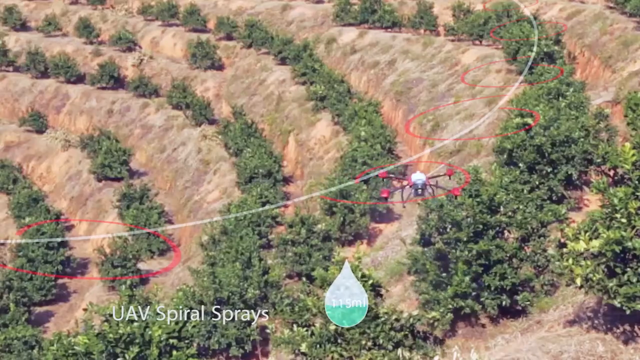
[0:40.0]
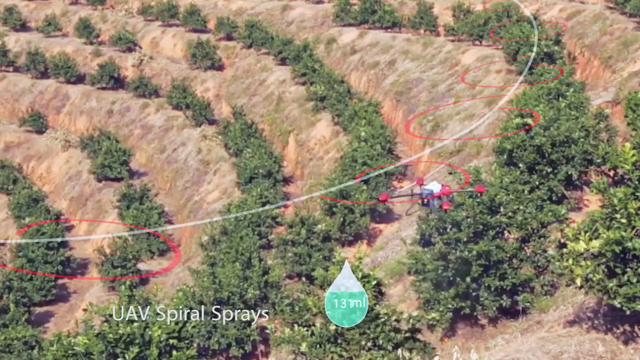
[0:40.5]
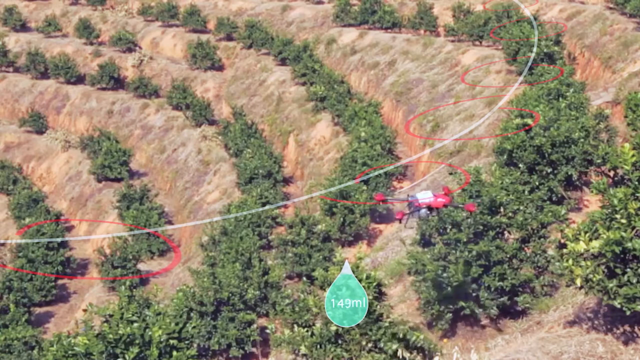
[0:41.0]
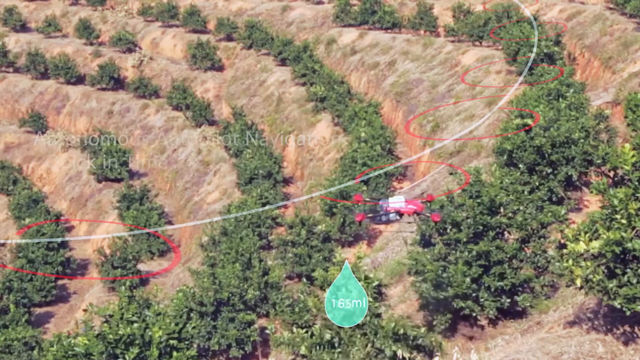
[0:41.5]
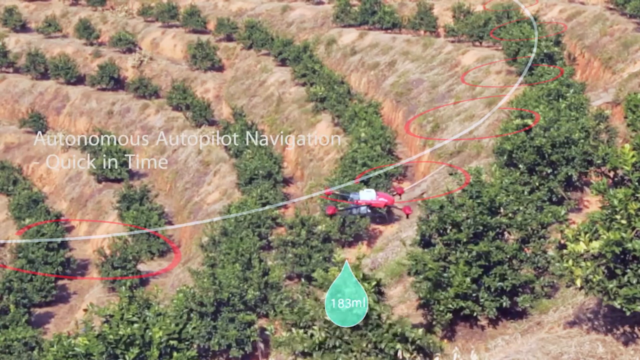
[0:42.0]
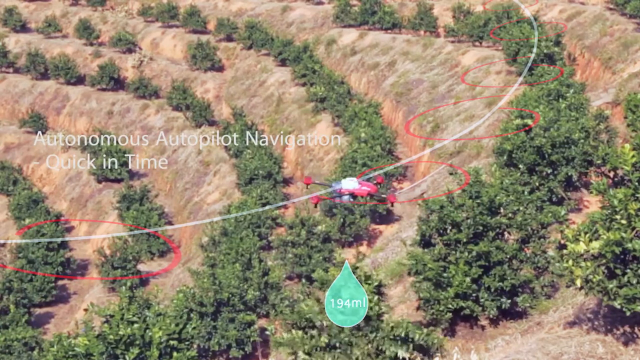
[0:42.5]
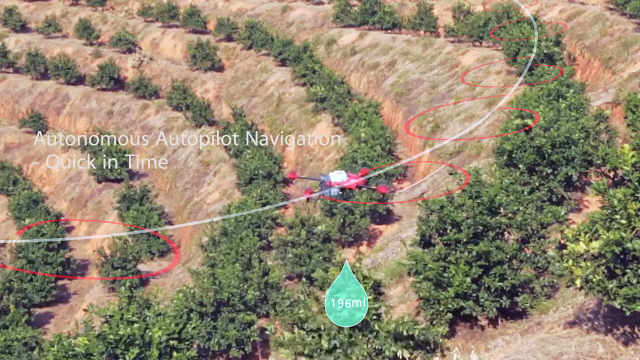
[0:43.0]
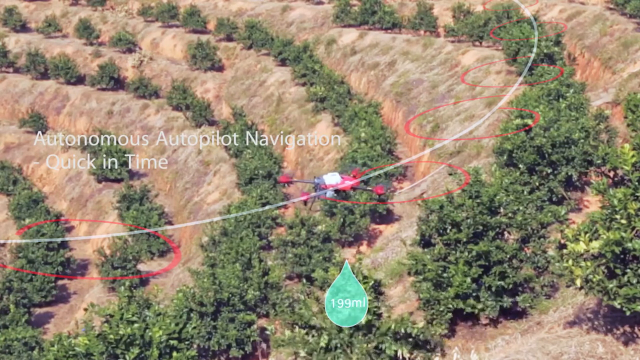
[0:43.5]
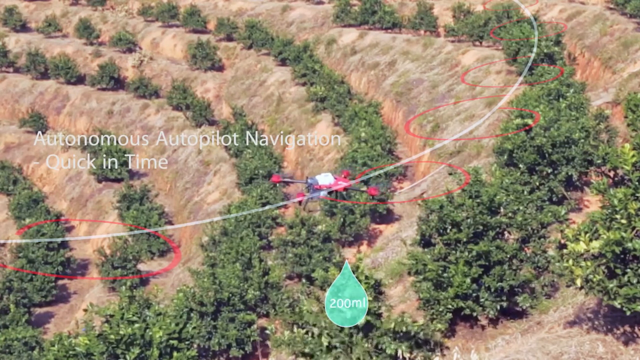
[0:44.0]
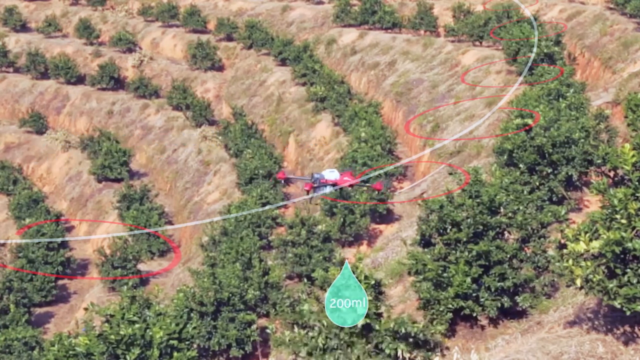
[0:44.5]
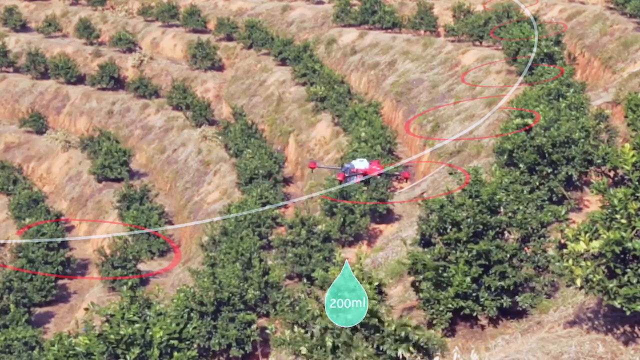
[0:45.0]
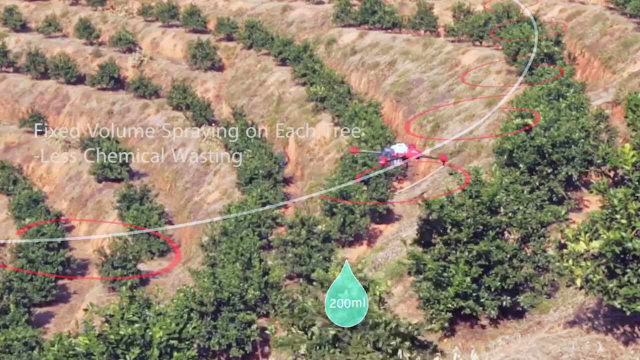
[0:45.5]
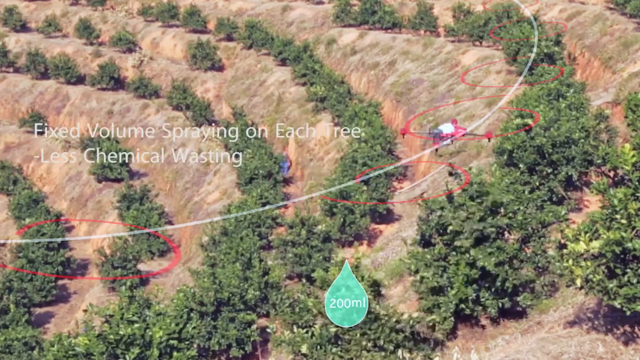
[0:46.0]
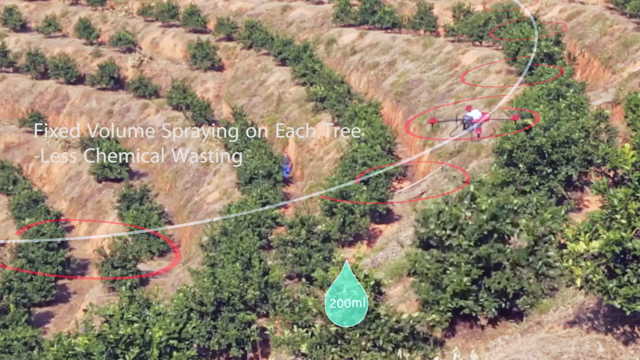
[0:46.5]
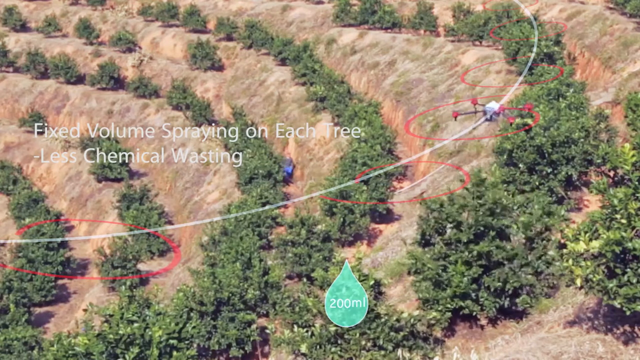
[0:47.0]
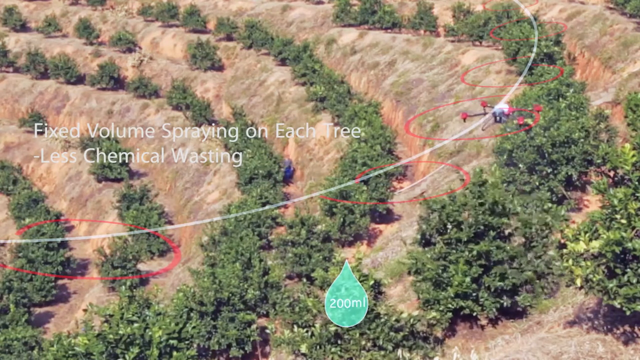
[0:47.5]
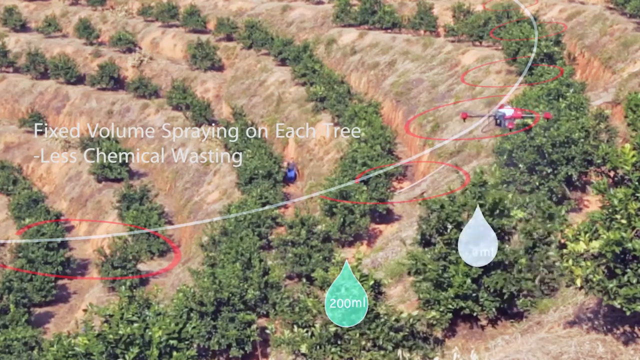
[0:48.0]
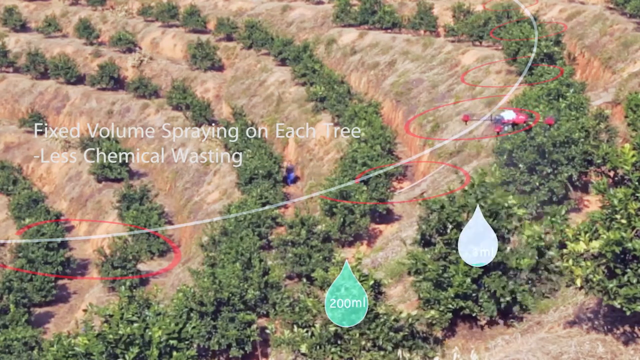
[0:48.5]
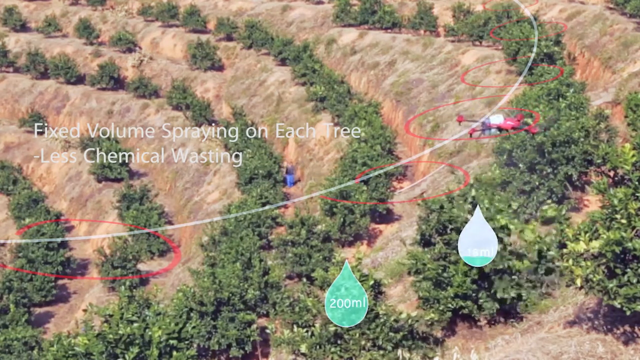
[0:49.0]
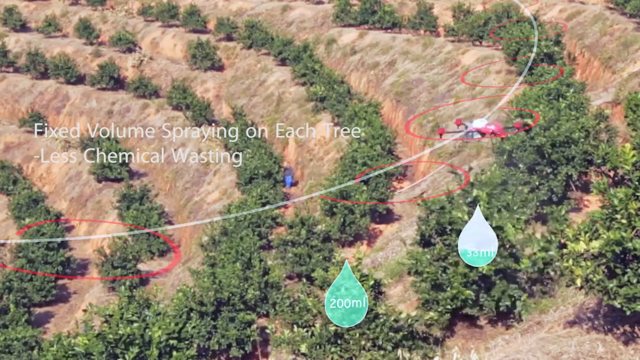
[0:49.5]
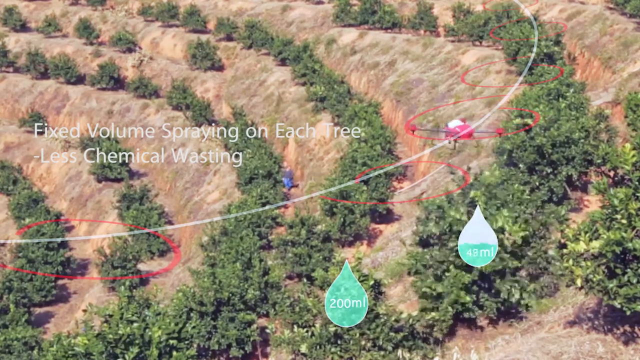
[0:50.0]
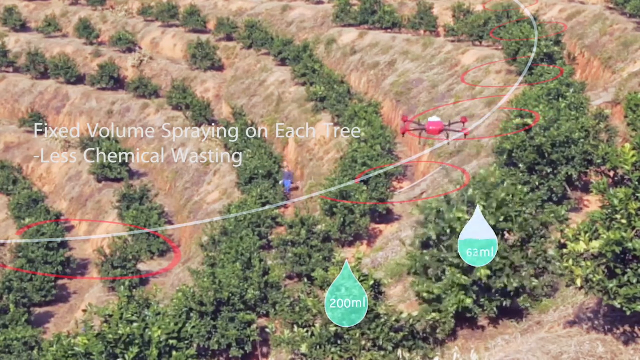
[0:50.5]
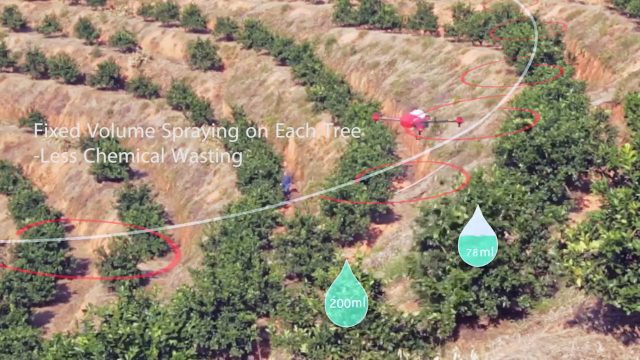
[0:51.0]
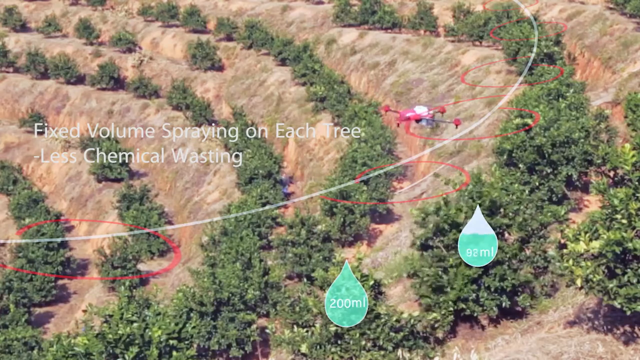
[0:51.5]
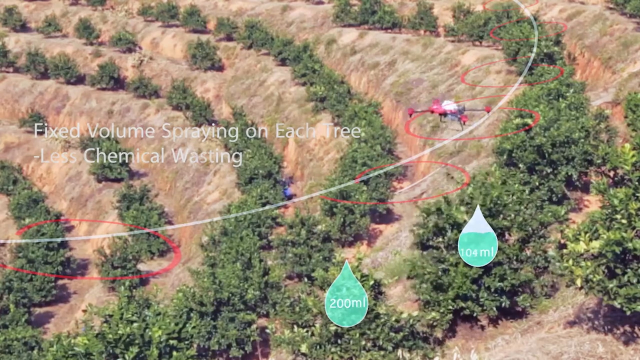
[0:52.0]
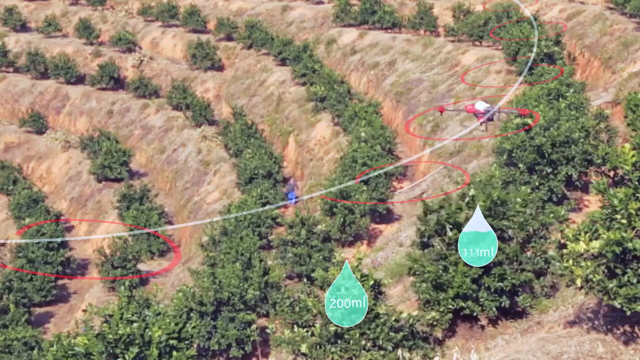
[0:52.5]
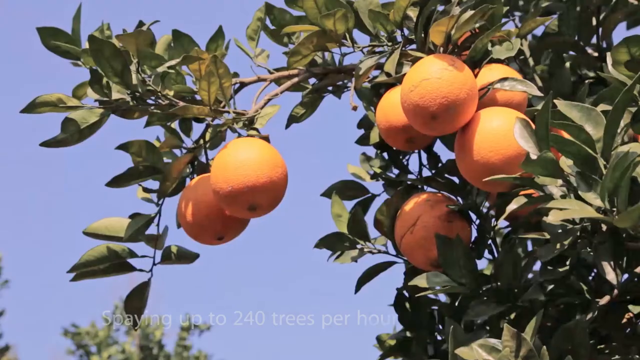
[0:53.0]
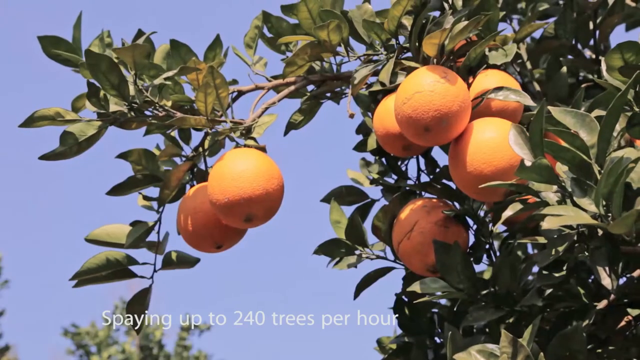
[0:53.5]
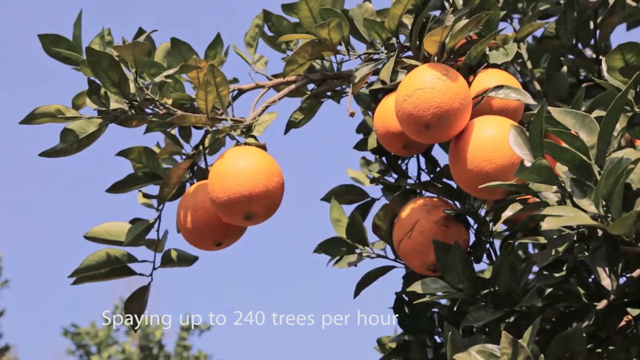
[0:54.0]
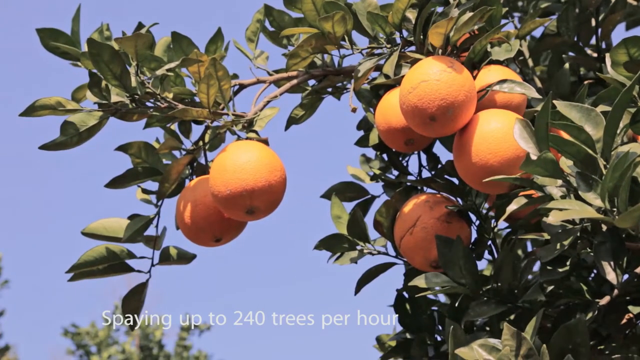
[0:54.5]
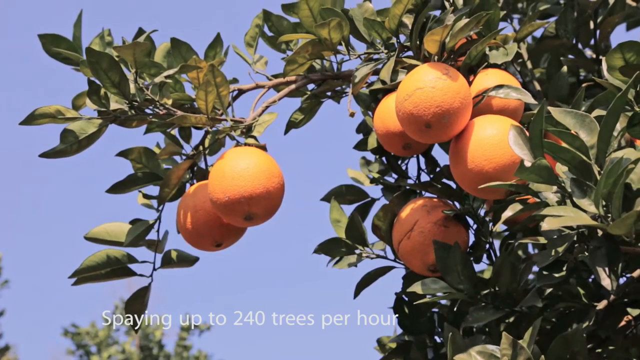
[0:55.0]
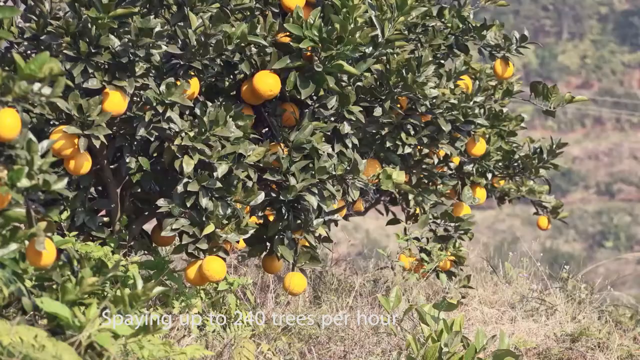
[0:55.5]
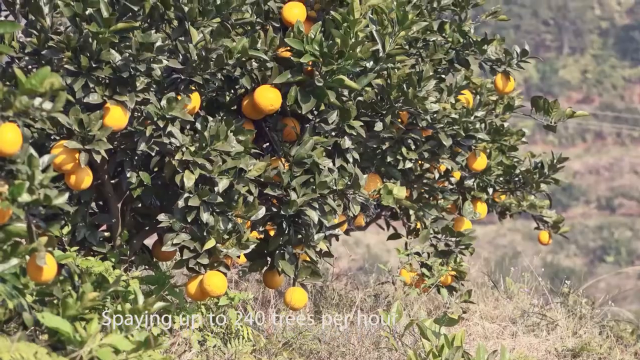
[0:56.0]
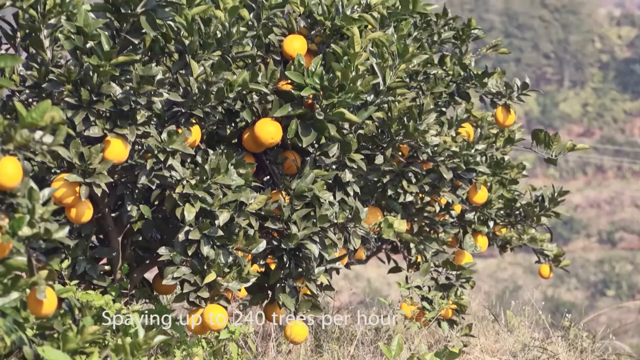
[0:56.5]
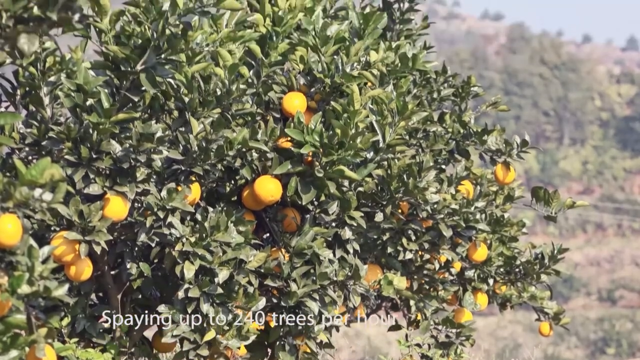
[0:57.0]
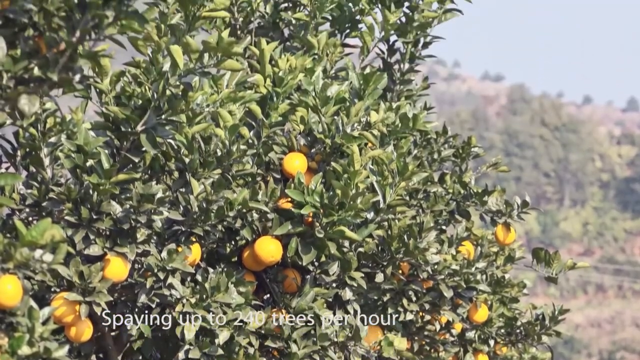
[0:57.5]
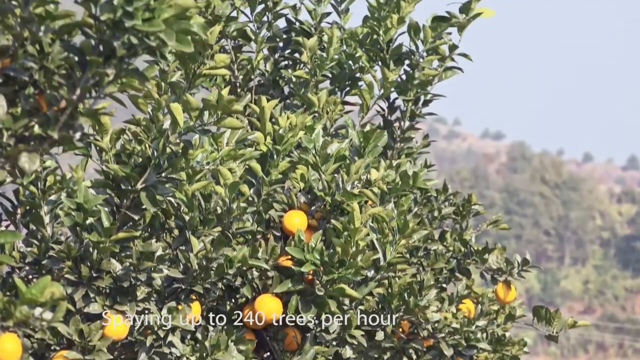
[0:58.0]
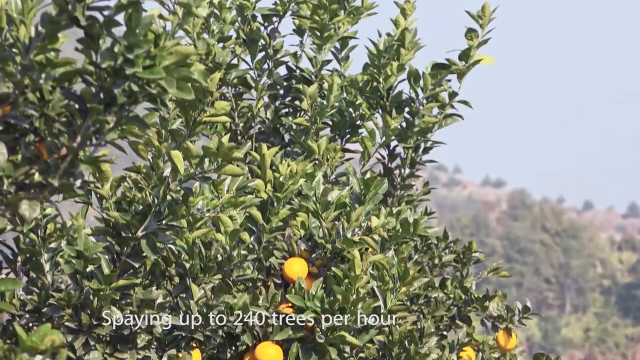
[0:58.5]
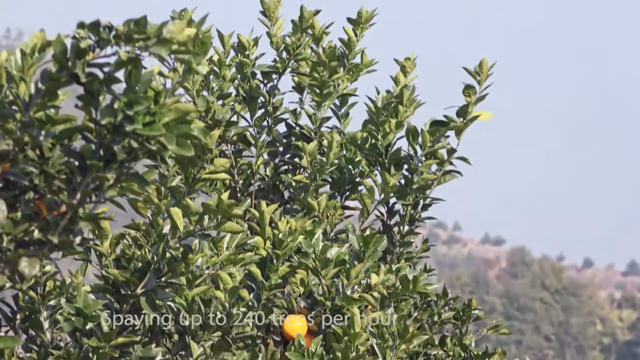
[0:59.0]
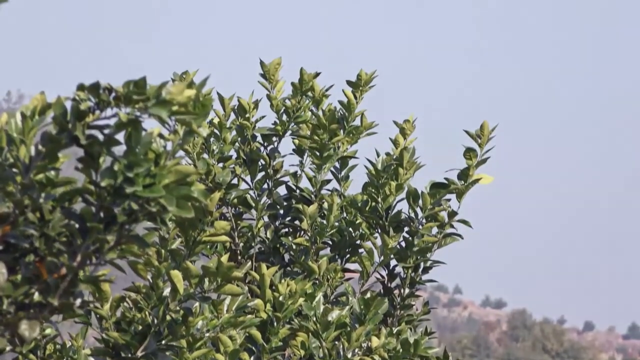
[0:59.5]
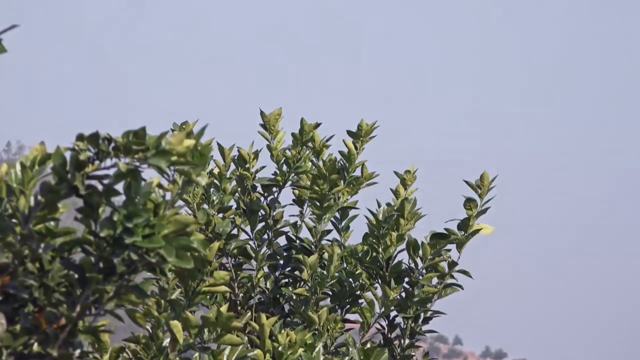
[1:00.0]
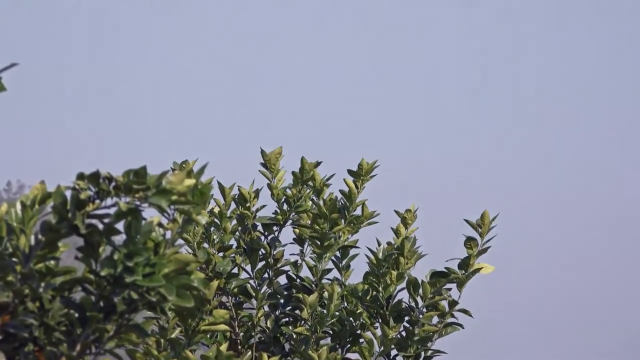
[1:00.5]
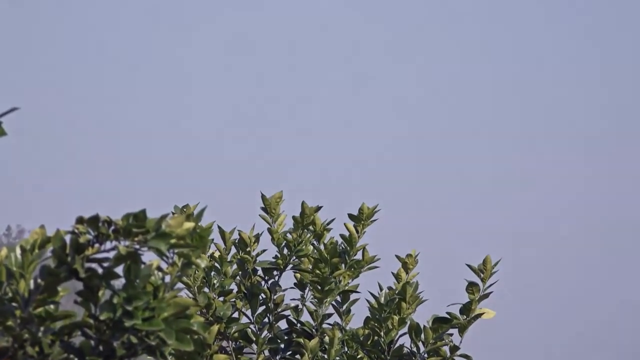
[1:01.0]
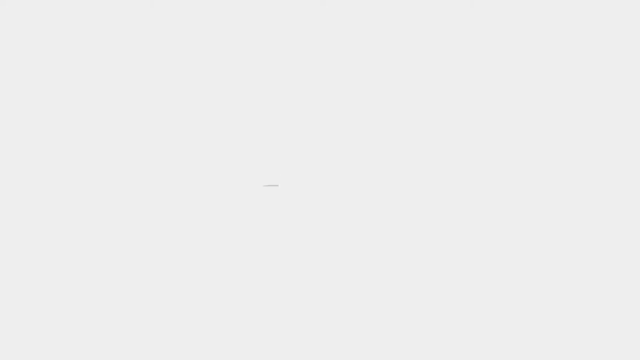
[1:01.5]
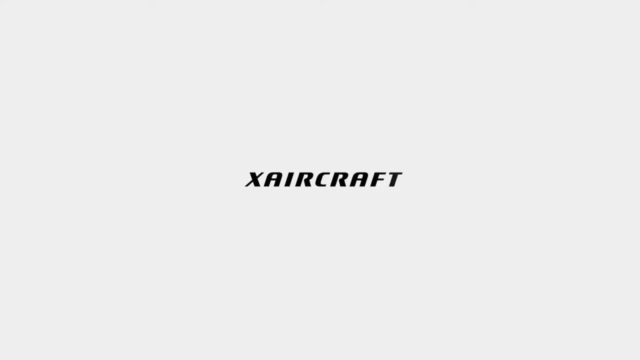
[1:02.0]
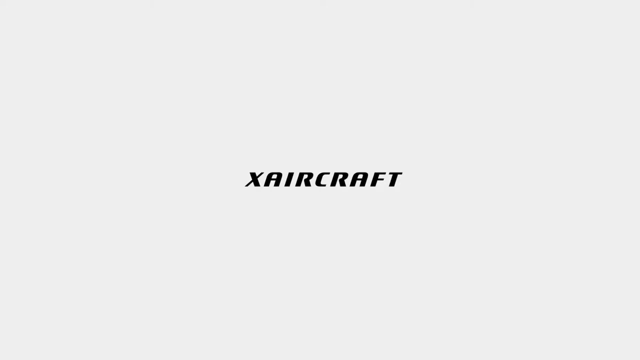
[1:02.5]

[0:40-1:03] A drone flies over terraced hills, appearing to fly along a circuit of the hills, with a line showing its flight path. On the left side it says "fixed volume spraying on each tree, less chemical wasting." Red circles are shown around spots along the flight path, presumably where the drone would stop. The drone flies over the trees, which shake in response, and icons of water droplets over the trees it flies over gradually fill up with water. The camera cuts to an image of what appear to be oranges growing from a fruit tree. It then transitions to another view of a fruit tree and slowly pans up it until it shows a cloudless blue sky. As the camera reaches the top of the tree, the video ends.